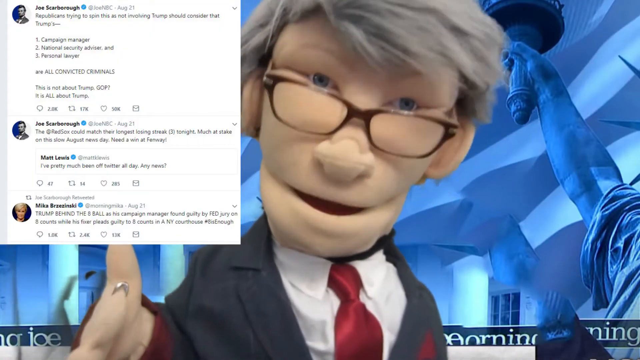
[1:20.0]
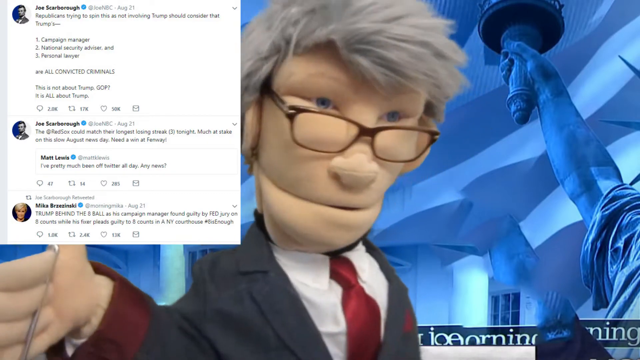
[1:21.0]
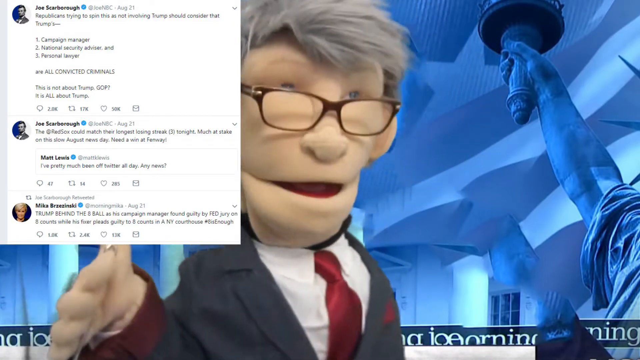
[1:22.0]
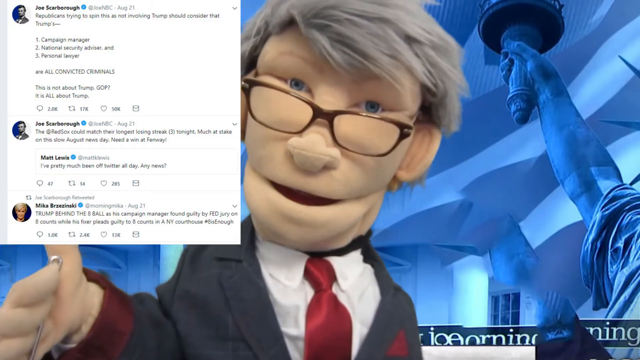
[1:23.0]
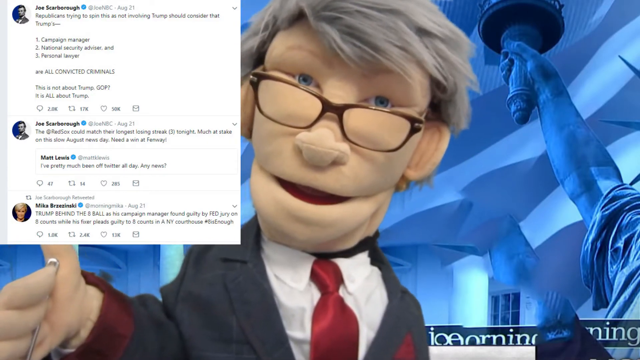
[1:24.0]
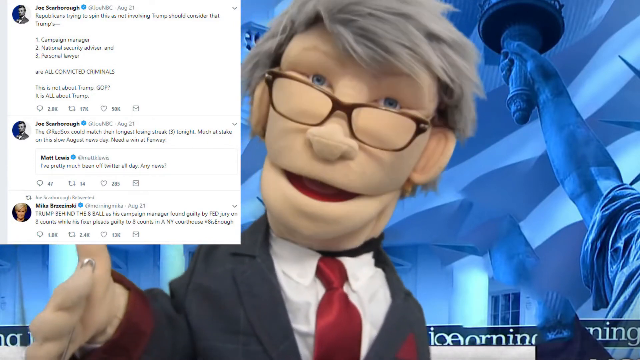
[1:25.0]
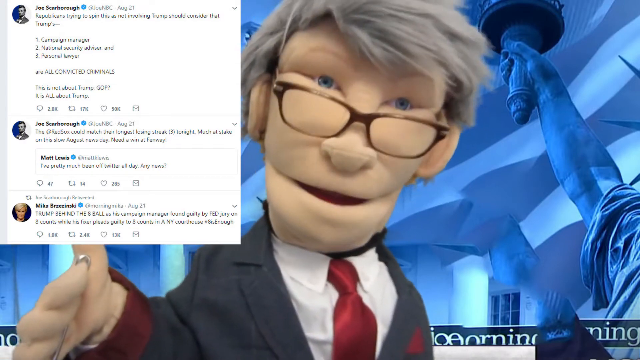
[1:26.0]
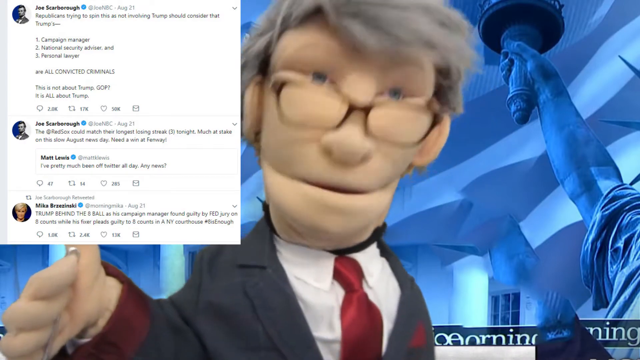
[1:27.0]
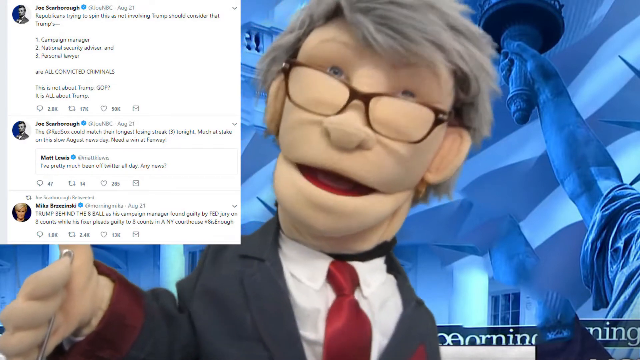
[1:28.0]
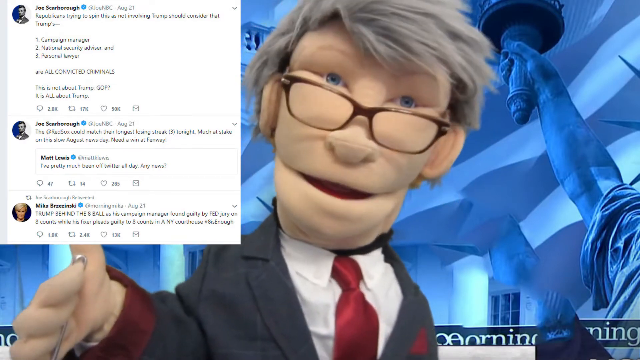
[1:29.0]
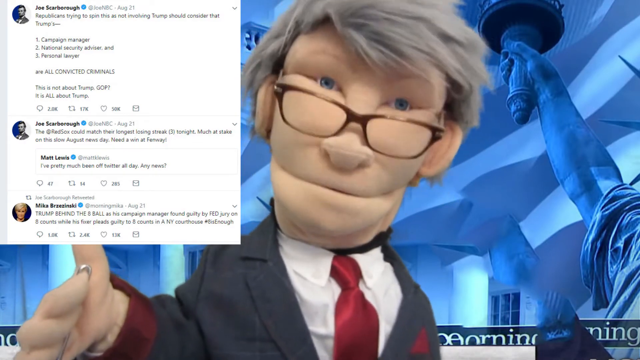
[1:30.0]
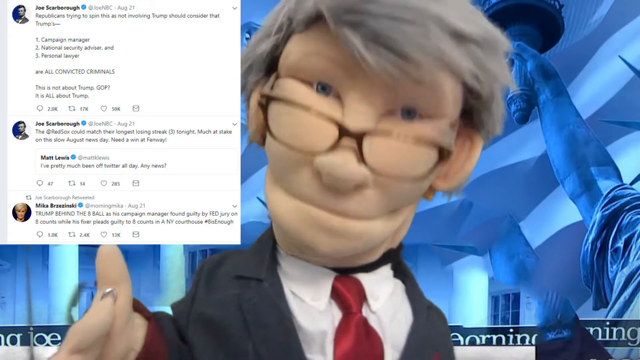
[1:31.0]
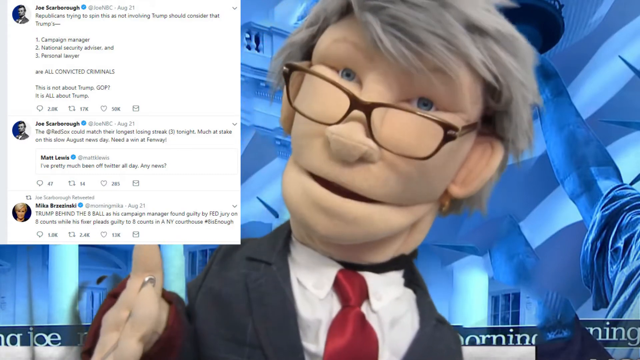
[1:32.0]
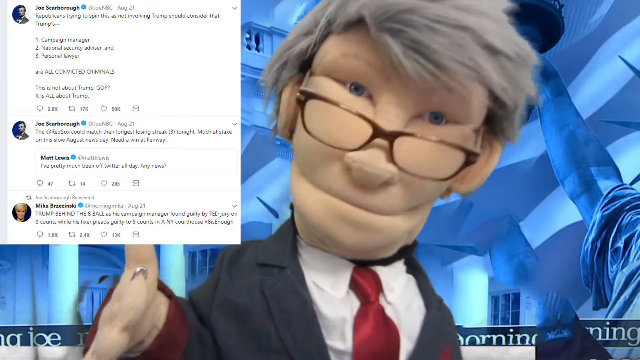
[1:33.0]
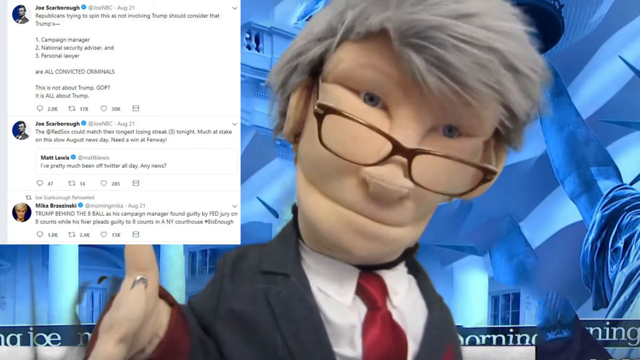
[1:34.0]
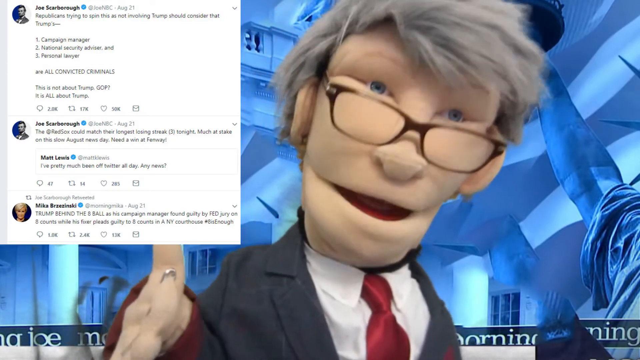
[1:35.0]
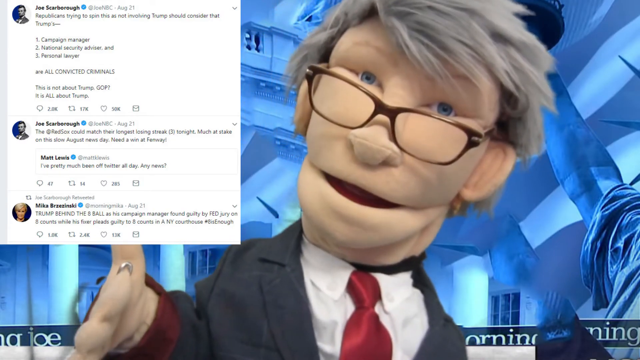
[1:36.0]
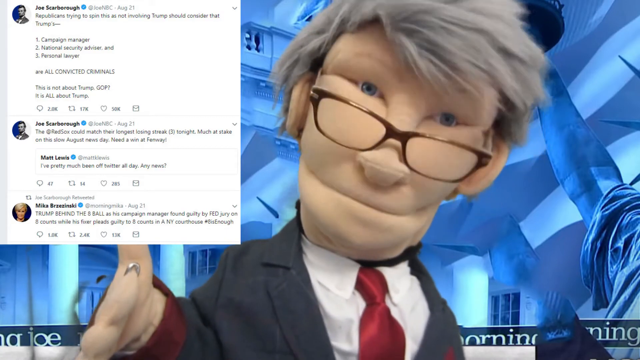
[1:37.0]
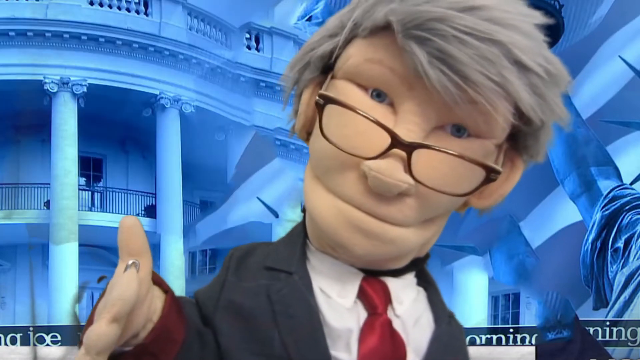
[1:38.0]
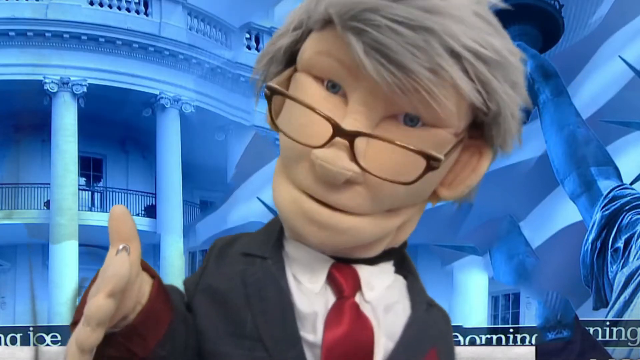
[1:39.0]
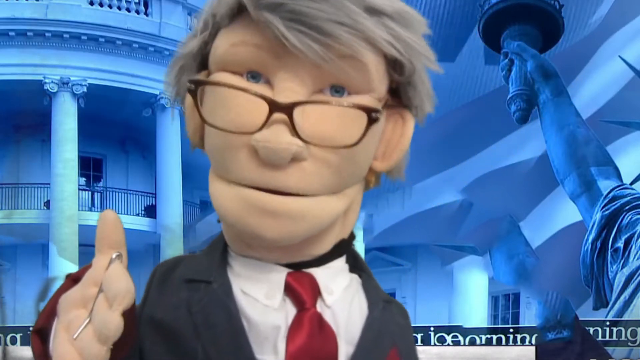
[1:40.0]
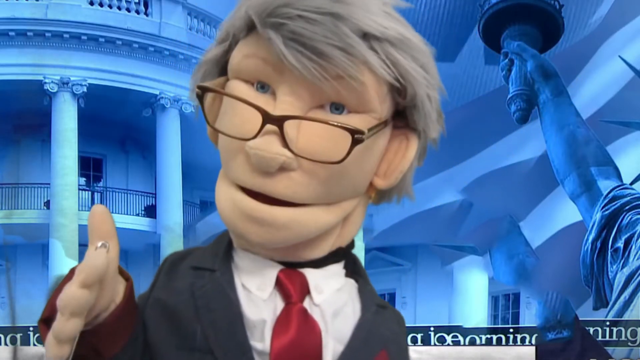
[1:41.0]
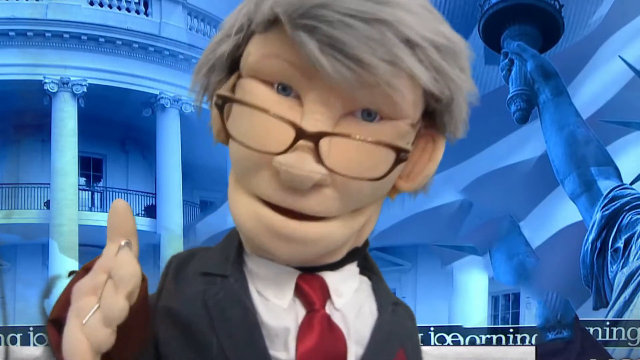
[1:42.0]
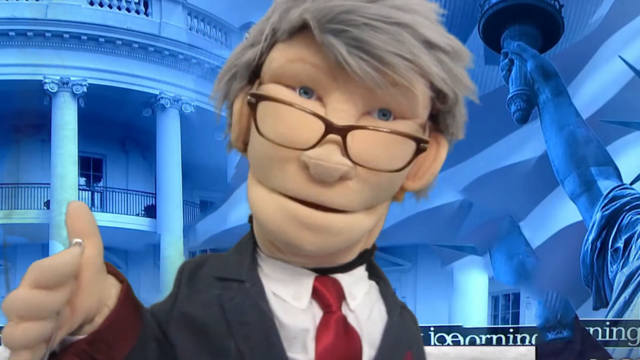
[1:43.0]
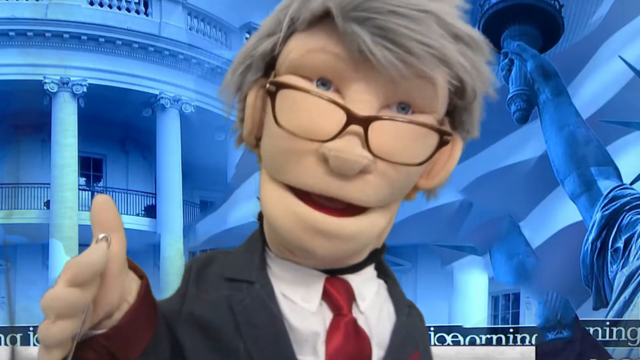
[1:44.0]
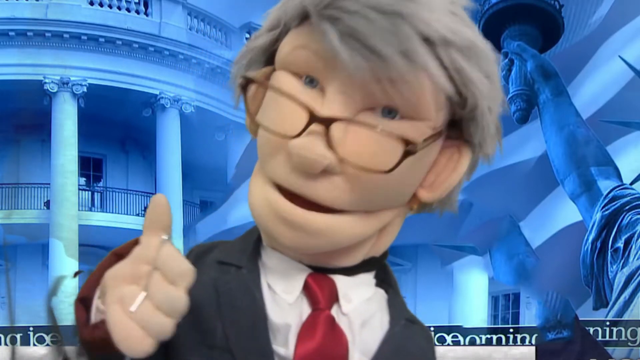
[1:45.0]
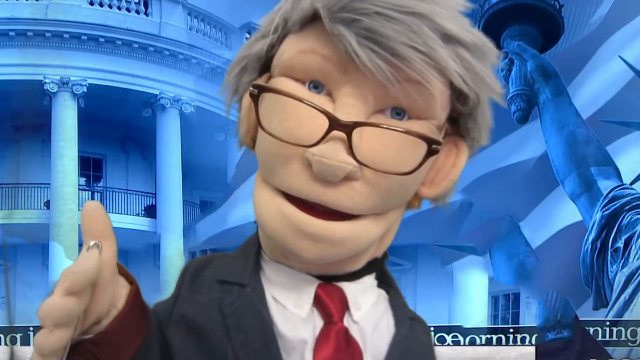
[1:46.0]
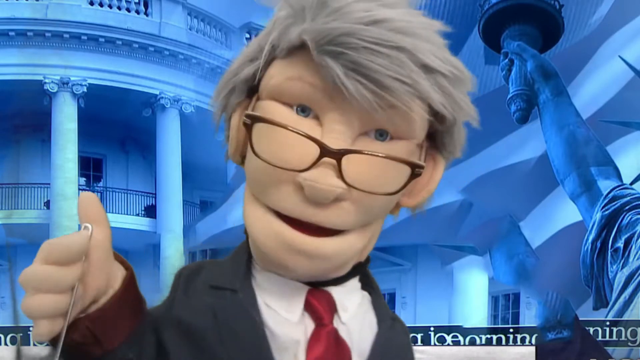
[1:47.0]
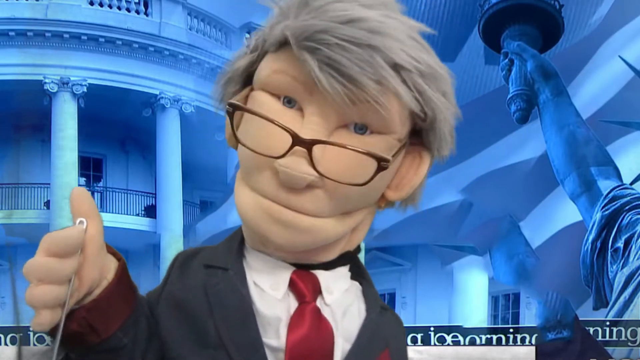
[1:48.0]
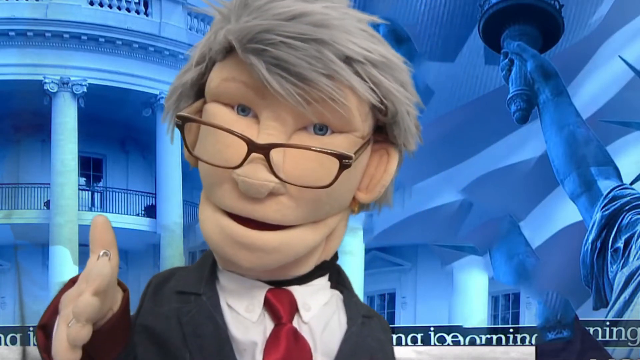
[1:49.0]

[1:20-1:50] A Muppet in the center of the screen talks directly to the audience, with a logo in the bottom section of the screen. On the left side of the screen is a comment section with many small pieces of text. The background has a light blue texture, an American flag and a statue. The whole scene looks like a news channel.